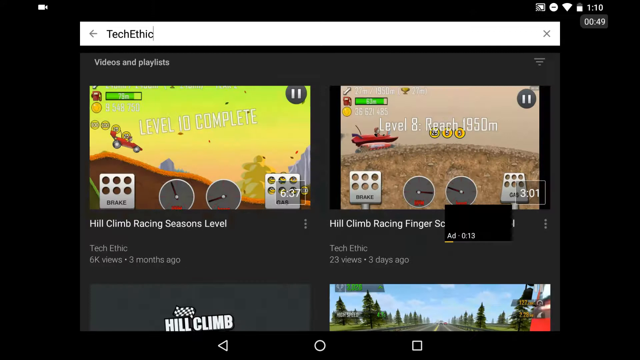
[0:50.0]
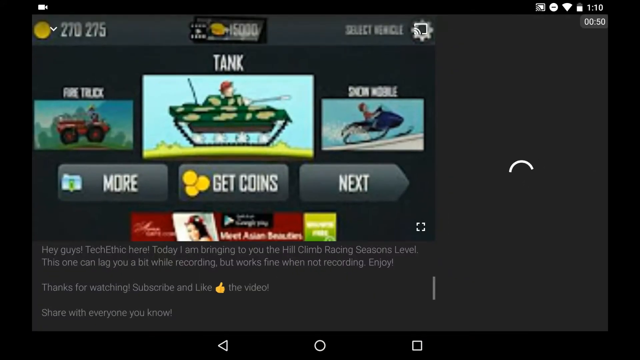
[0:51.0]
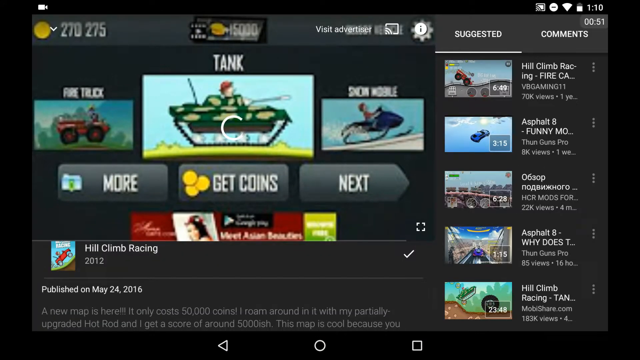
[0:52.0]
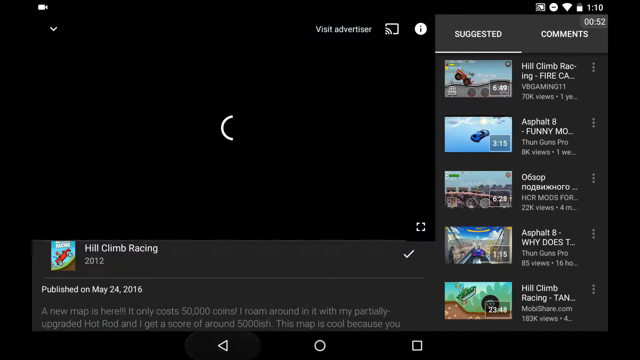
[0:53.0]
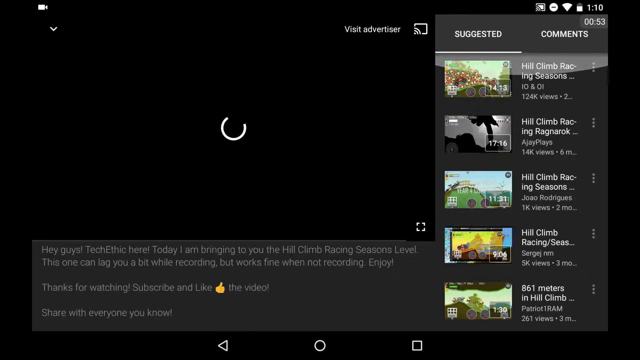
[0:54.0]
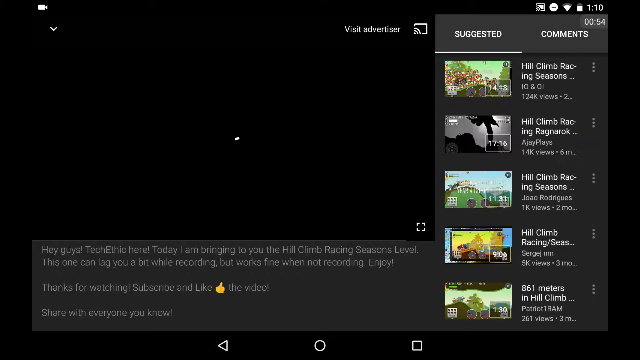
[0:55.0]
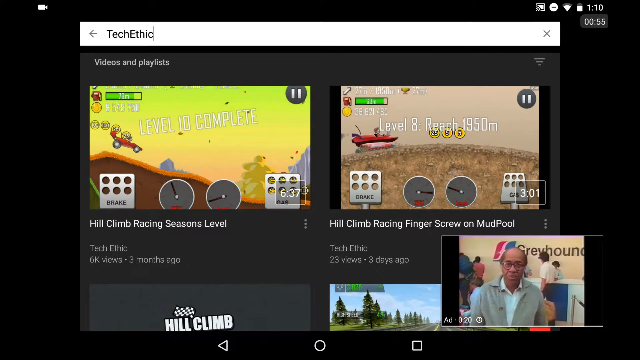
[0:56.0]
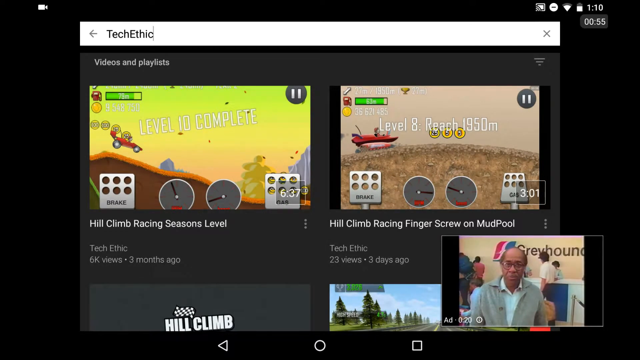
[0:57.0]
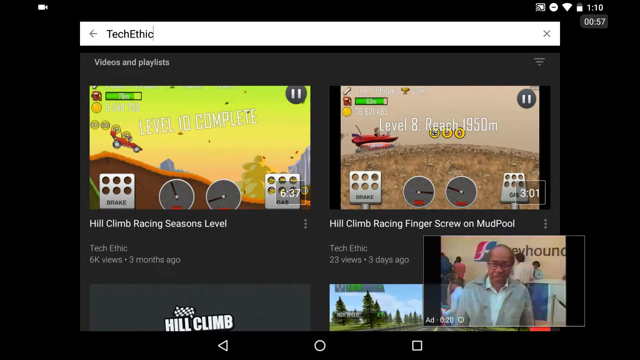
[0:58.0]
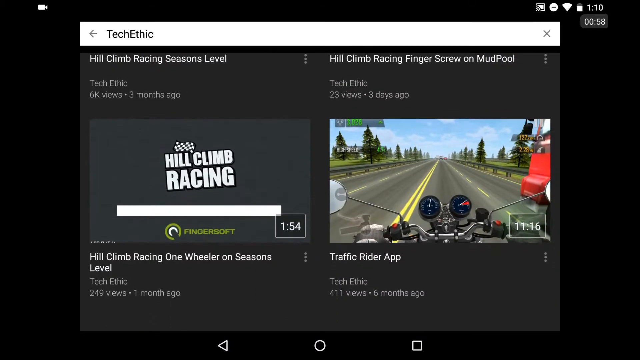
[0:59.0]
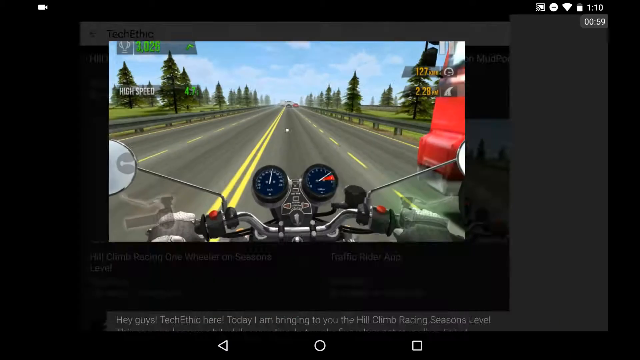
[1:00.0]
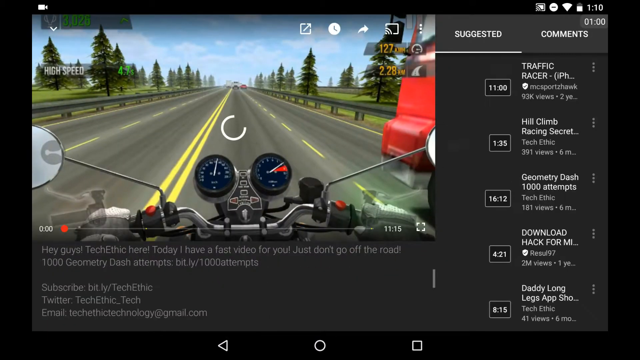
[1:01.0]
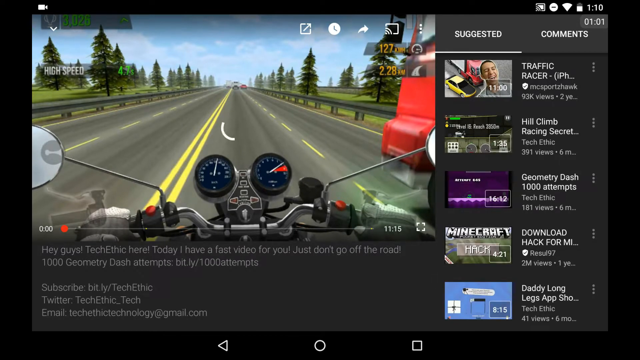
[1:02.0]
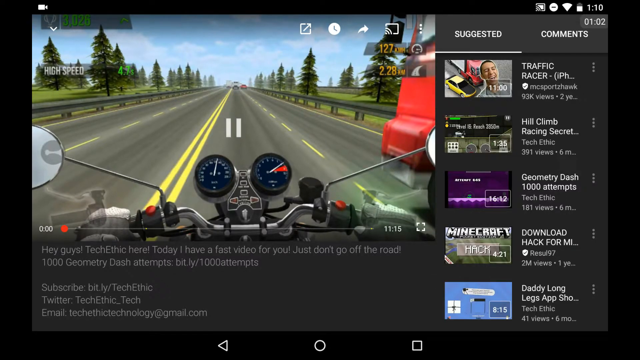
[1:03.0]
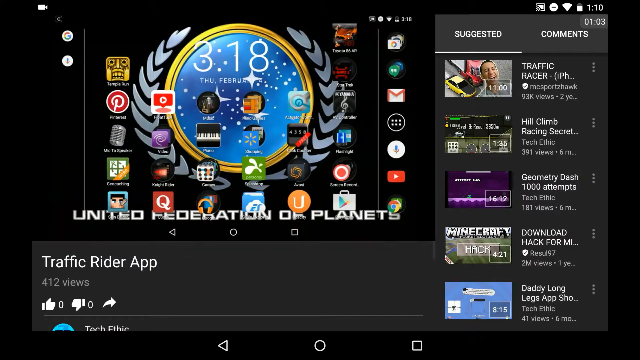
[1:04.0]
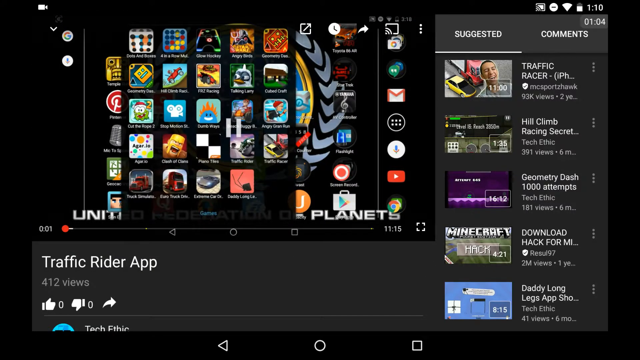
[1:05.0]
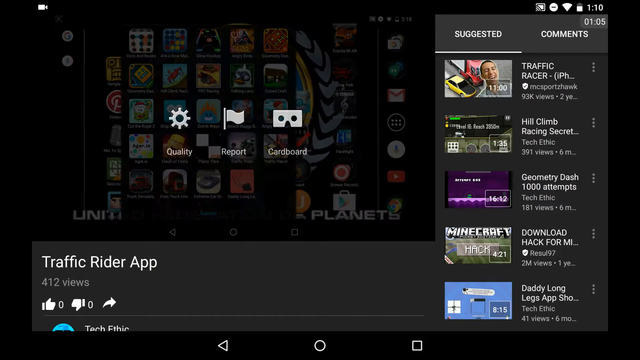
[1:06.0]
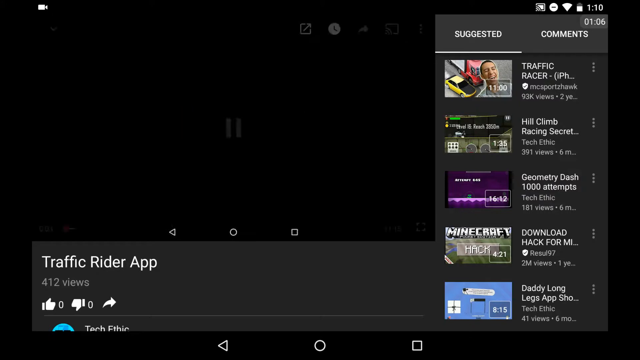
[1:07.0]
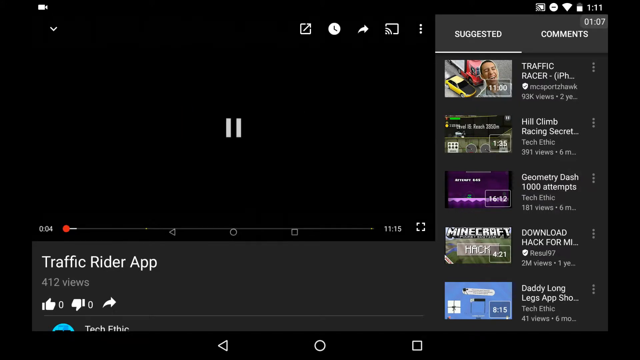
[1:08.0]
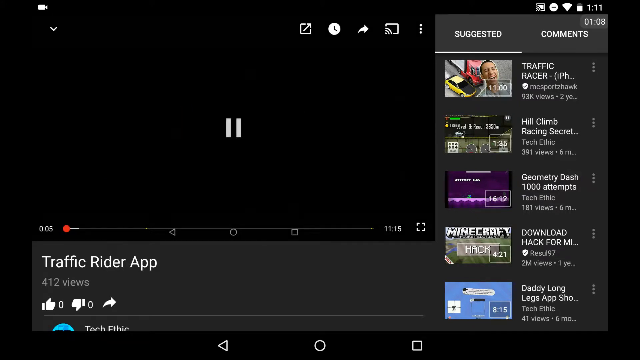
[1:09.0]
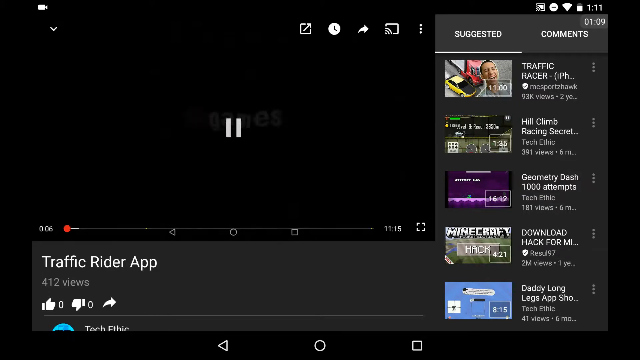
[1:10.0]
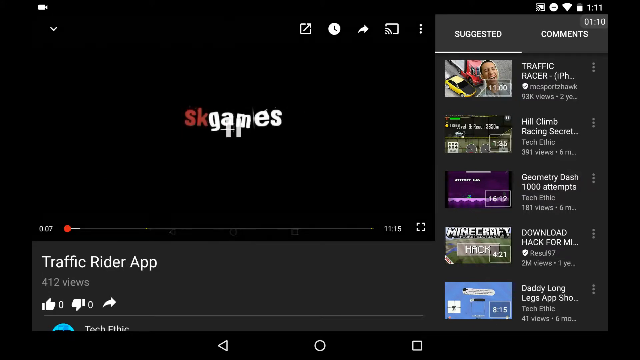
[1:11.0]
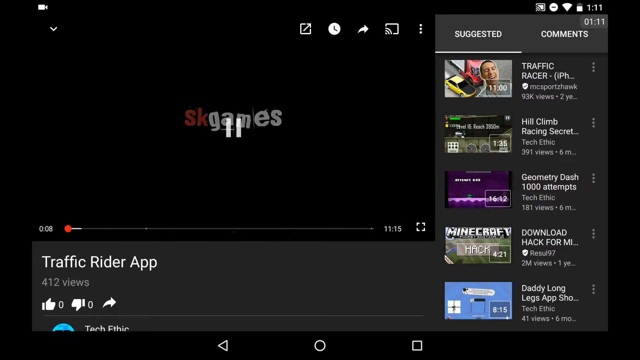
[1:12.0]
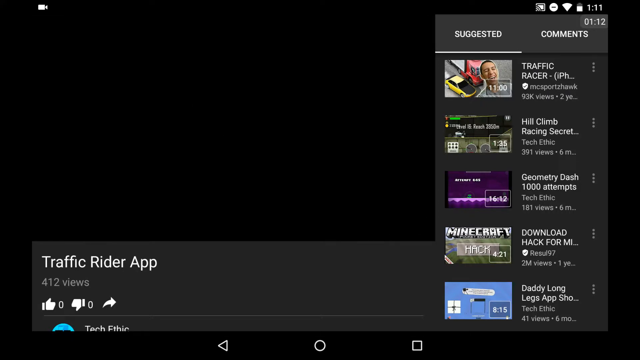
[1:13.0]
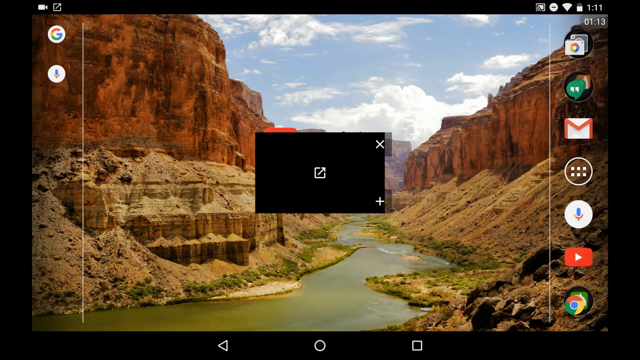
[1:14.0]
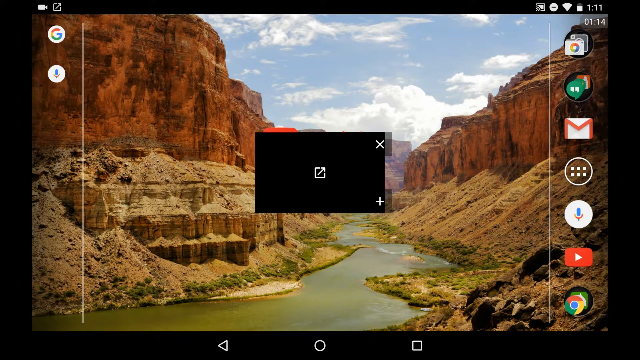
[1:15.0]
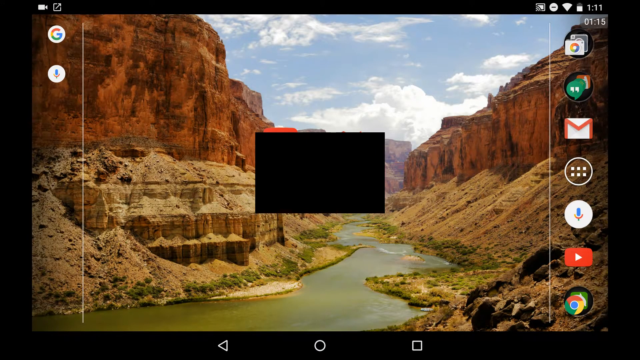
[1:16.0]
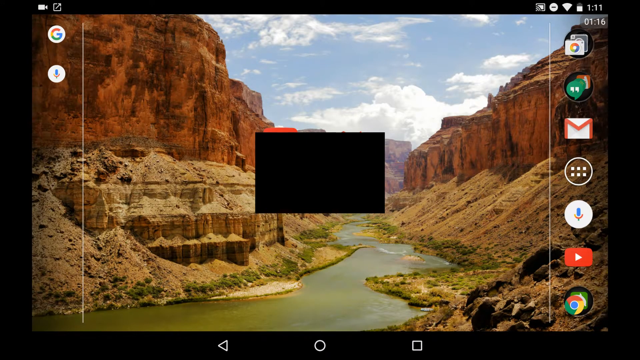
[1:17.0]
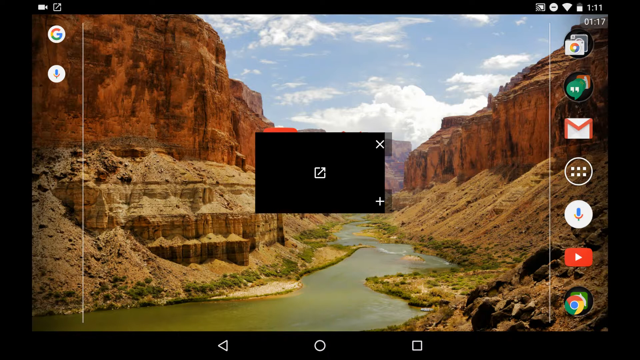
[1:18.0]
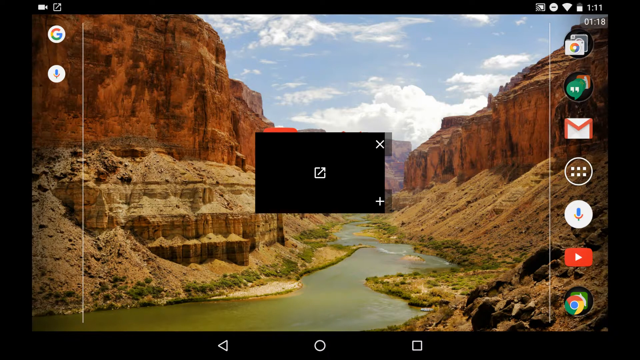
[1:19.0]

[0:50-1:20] A new screen for Hill Climb Racing appears within the YouTube app, with a number of vehicle options the user can choose: a fire truck, a tank, or a snowmobile. Beneath the name of each vehicle is an animated drawing of the vehicle. These appear to be purchasable with in-game currency. A list of related YouTube videos is on the right-hand side. The user selects a new video and minimizes the thumbnail into the bottom right of the screen. The thumbnail begins playing an advertisement, which the user quickly wipes off the screen, then opens a YouTube video for the Traffic Rider app and quickly pauses on the loading screen for SK Games. The user minimizes the app and returns to the desktop home screen, whose background is a picture of the Grand Canyon with a partially cloudy sky and the river running through the middle of the canyon. The black thumbnail from the video is in the middle of the screen.